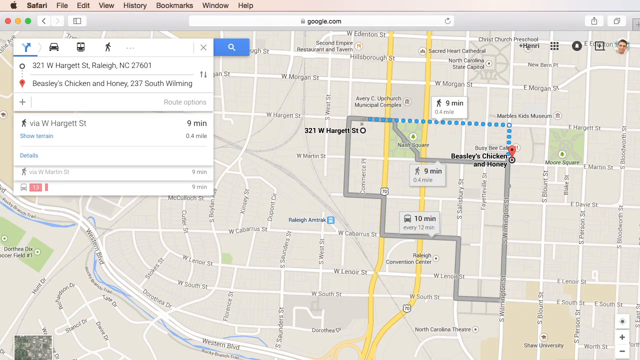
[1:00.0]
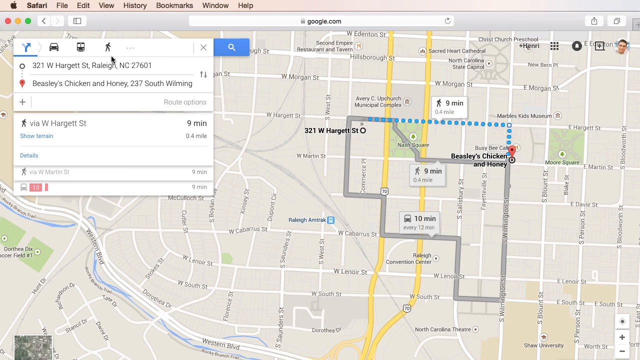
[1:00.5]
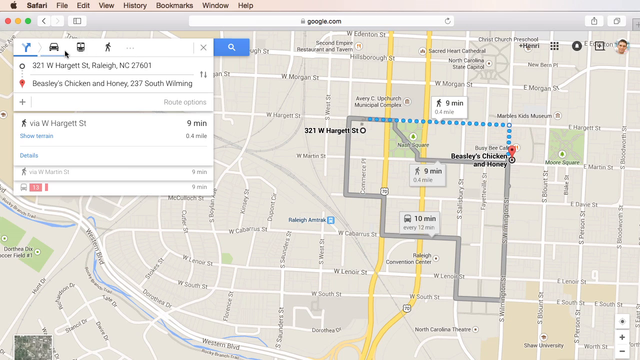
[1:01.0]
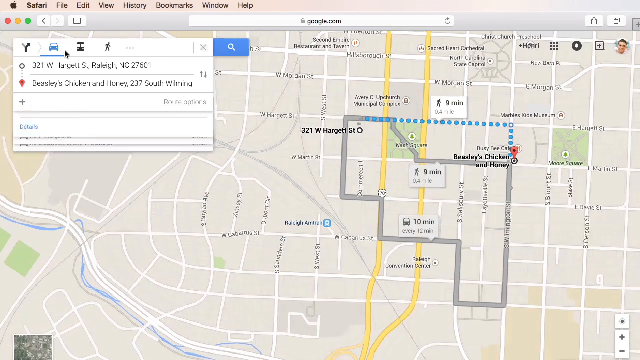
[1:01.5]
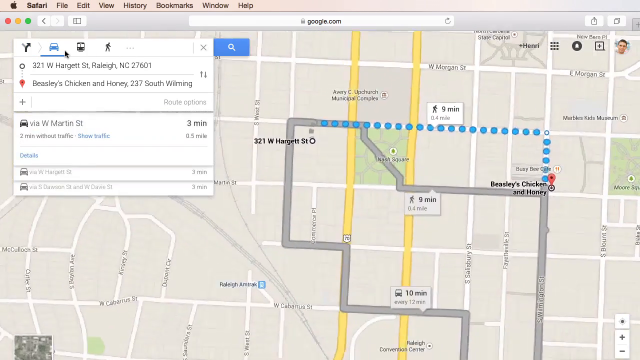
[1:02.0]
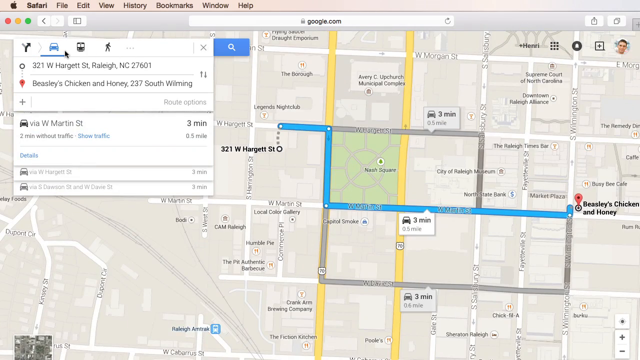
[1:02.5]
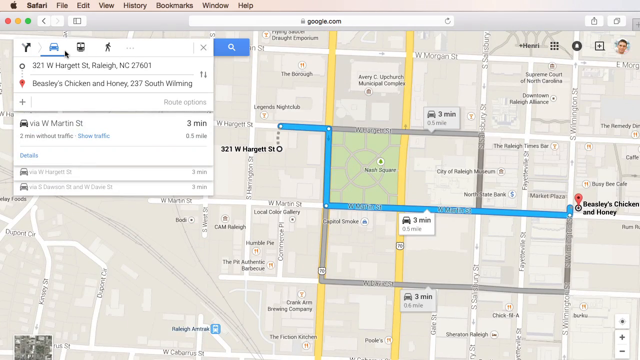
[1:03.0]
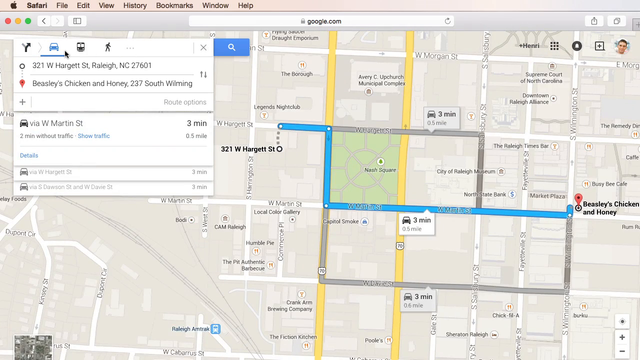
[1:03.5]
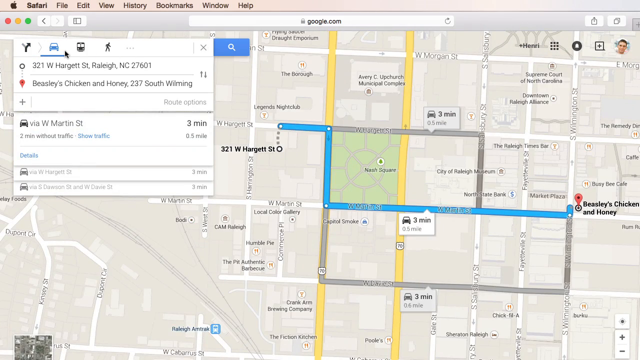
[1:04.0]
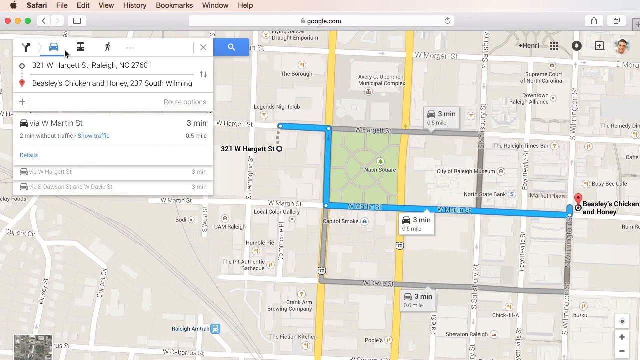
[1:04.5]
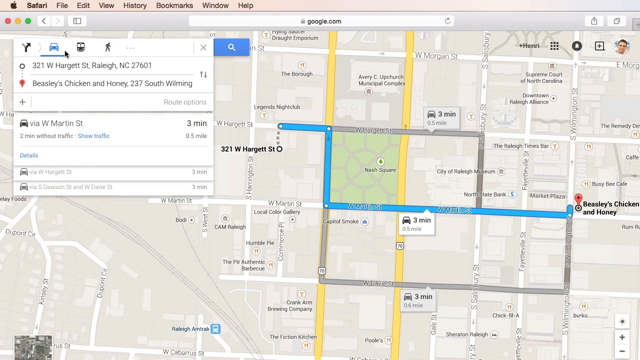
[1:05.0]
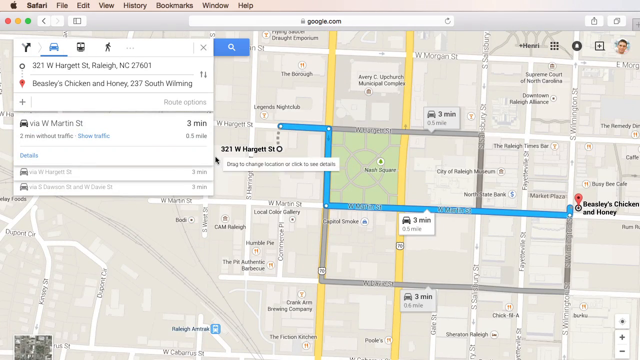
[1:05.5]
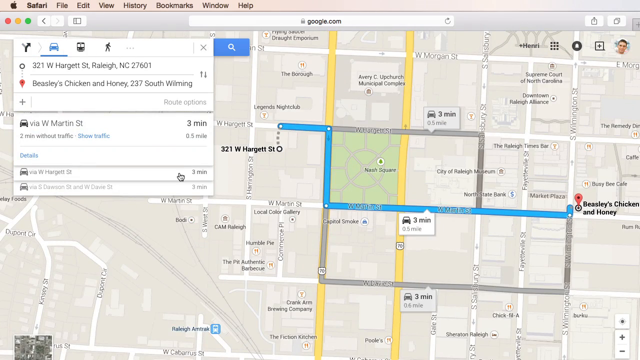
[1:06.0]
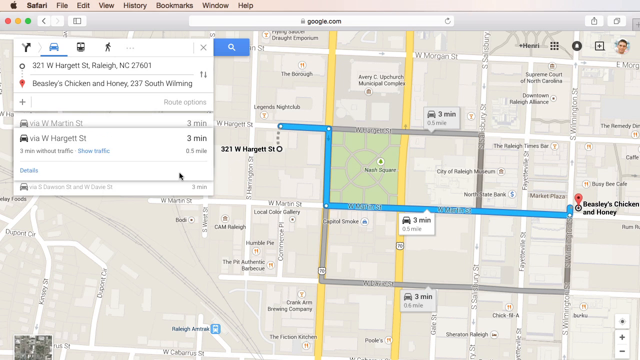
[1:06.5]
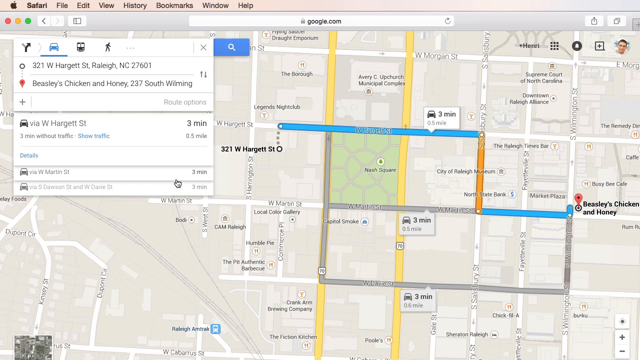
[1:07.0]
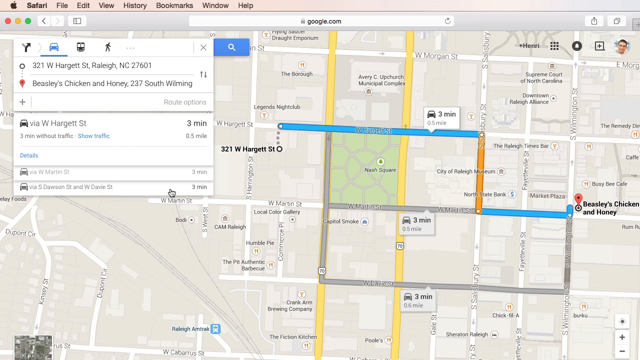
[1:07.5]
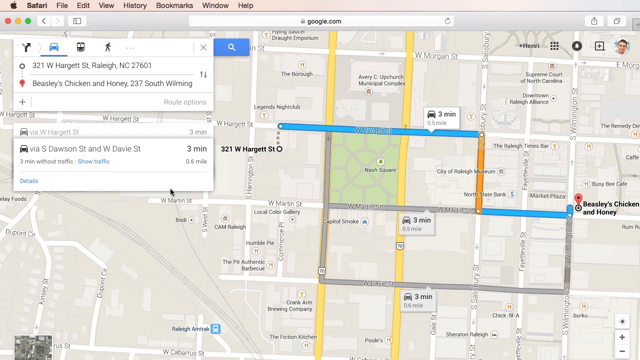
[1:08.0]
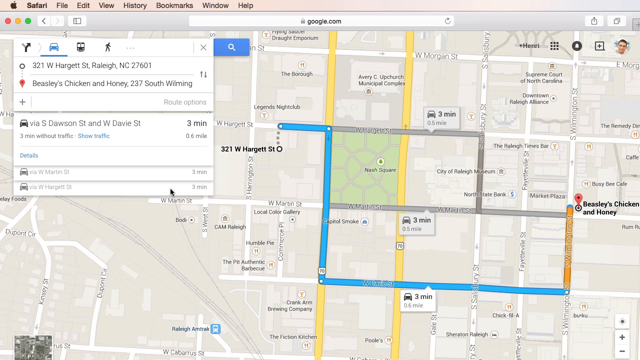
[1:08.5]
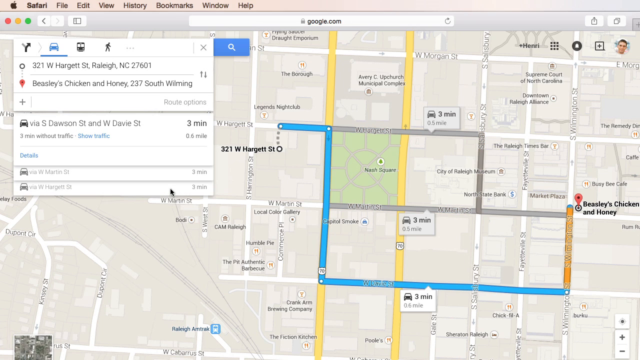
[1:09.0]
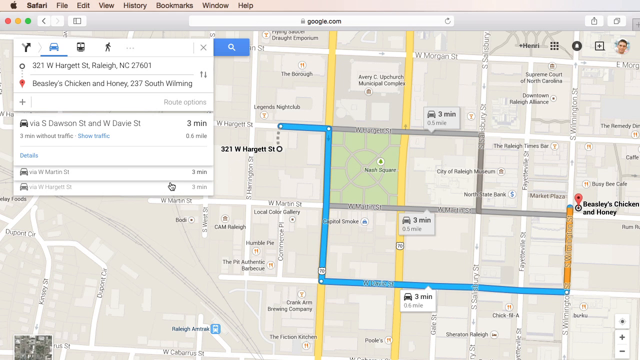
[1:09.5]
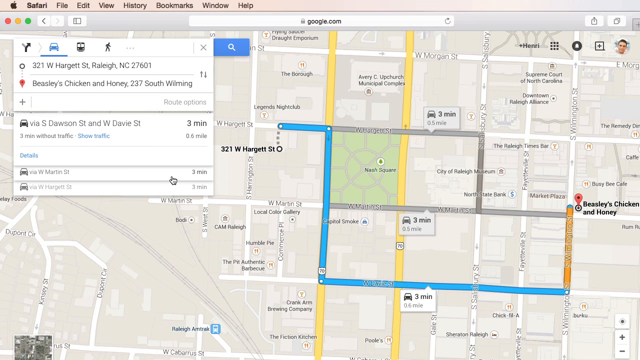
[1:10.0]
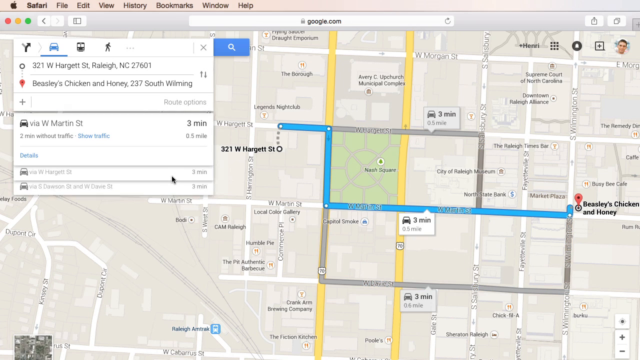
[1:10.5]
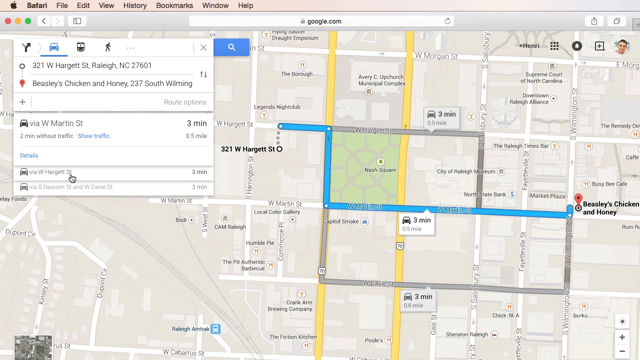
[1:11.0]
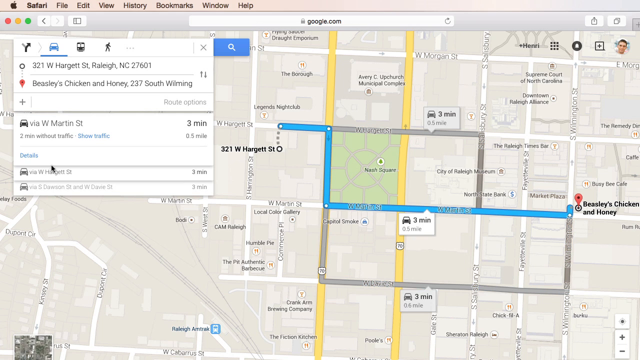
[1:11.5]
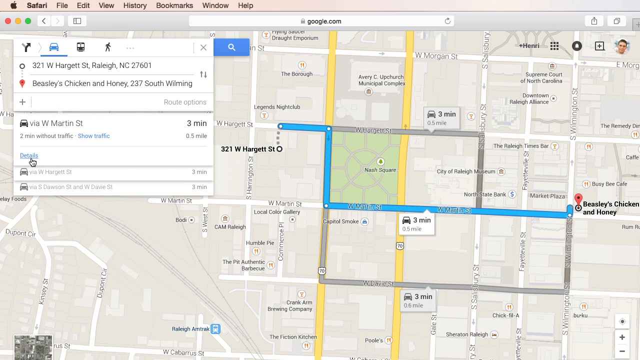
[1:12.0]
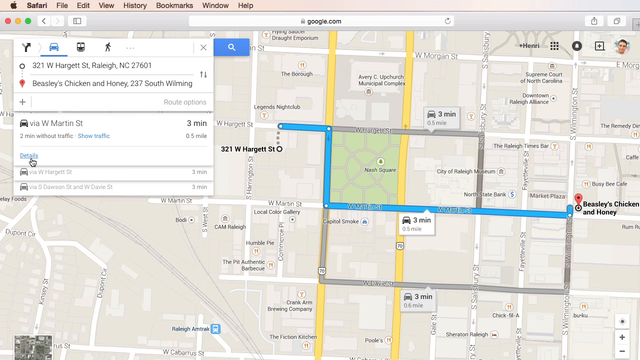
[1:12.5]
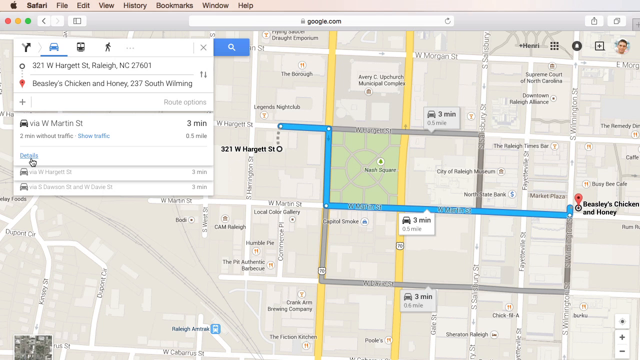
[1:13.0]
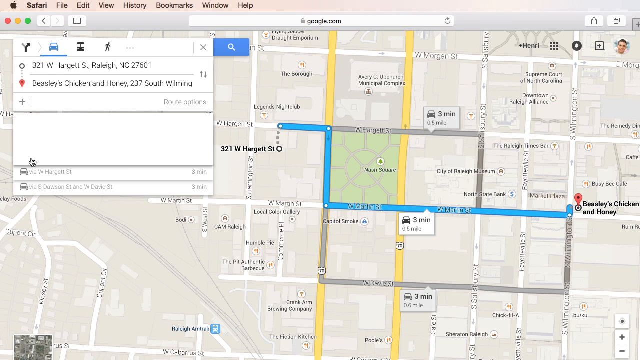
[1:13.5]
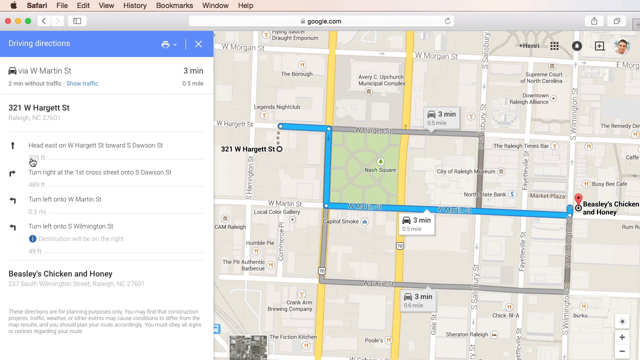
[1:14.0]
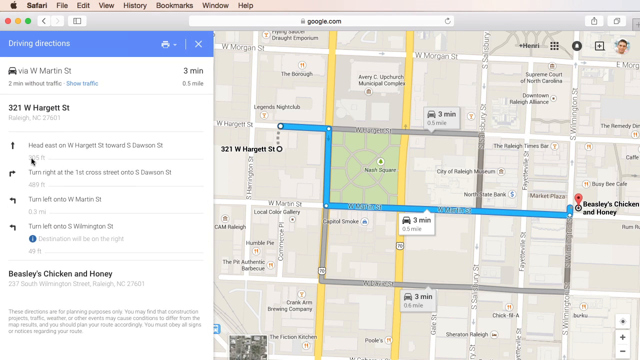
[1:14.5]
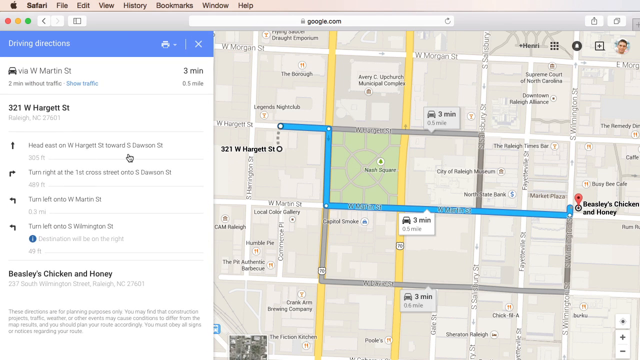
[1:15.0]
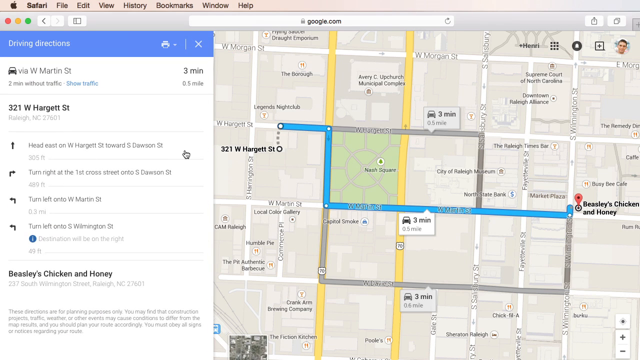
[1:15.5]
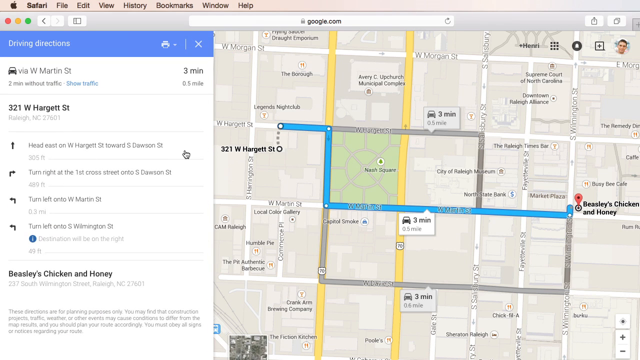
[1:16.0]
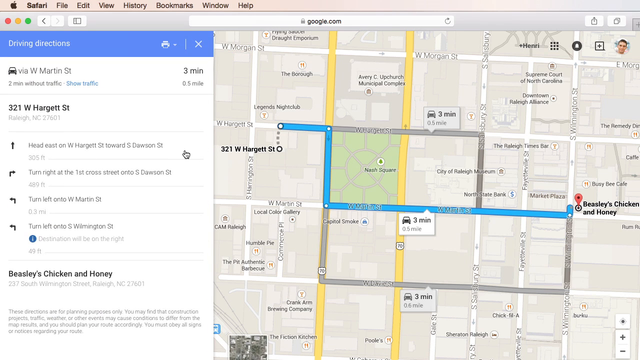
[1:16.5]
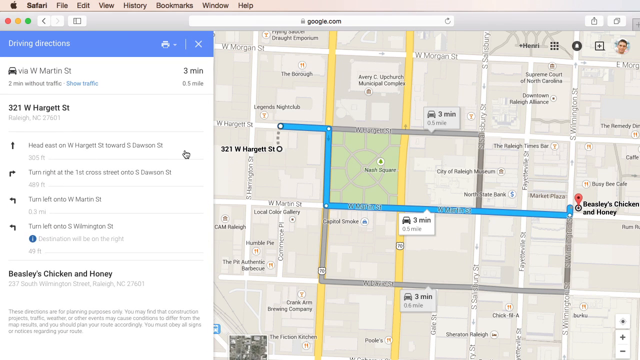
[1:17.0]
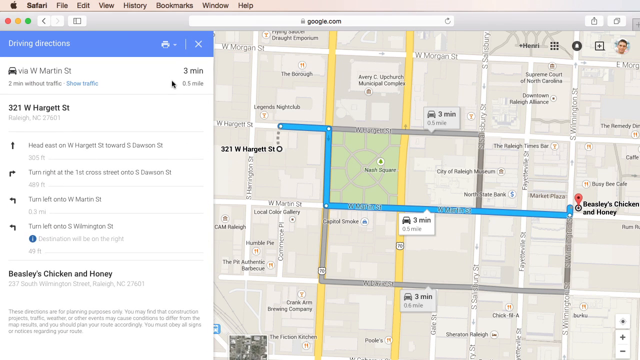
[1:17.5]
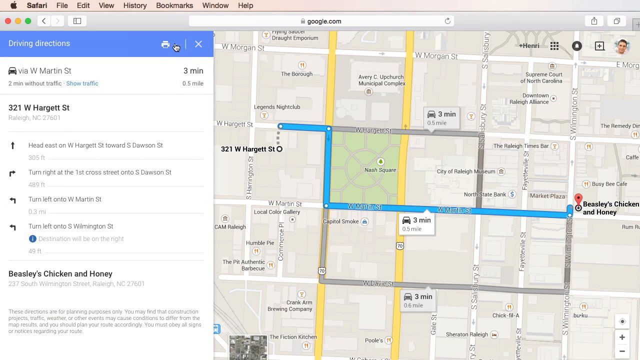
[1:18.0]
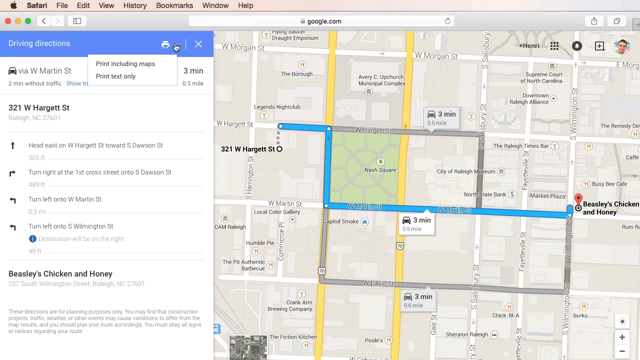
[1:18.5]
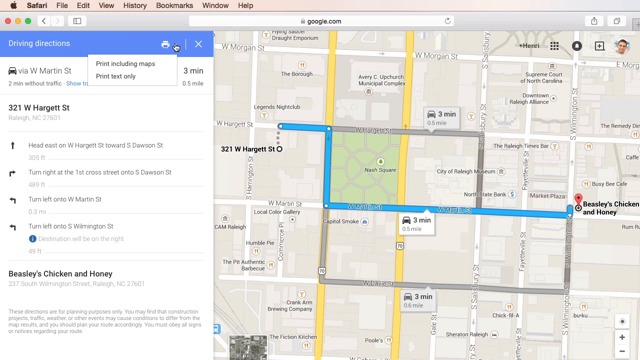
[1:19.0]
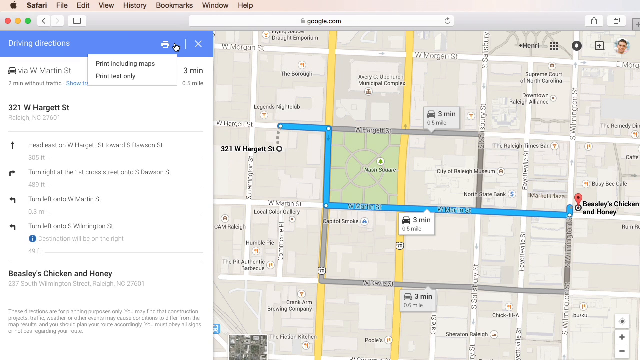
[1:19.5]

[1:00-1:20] The Google Maps screencast shows directions in Raleigh, North Carolina. The Getting Around panel is open with two locations typed in: 321 West Hargrett Street in Raleigh, North Carolina, zip code 27601, and Beasley's Chicken and Honey, 237 South Wilmington, also in Raleigh, North Carolina. The two locations are connected on the map by a dotted line route. The map zooms in to show the exact streets and turns, alongside a list showing how far to drive before each turn. The directions say "head east on West Hargrett Street toward South Dawson Street," "turn right at the first cross street on to South Dawson Street," "turn left onto West Martin Street," "turn left onto South Wilmington Street," and "destination will be on the right."